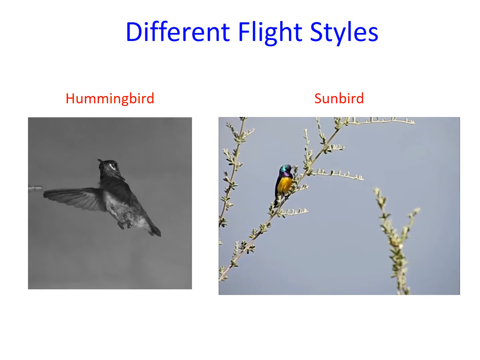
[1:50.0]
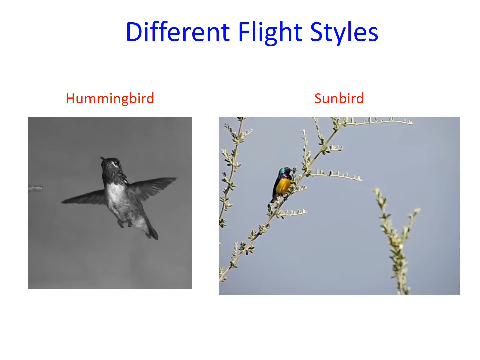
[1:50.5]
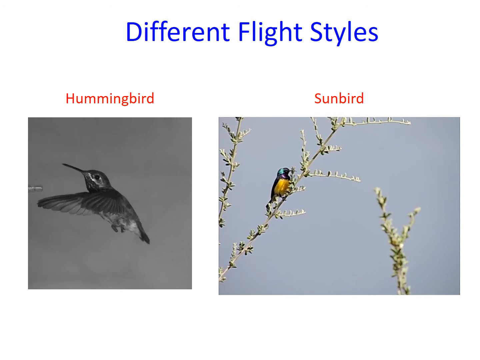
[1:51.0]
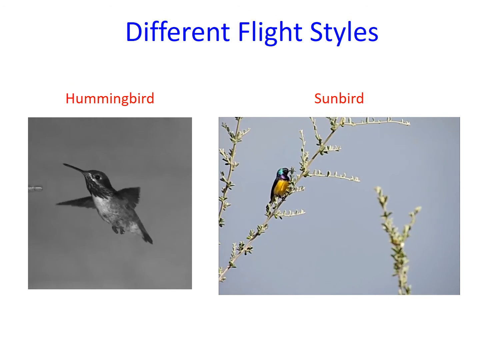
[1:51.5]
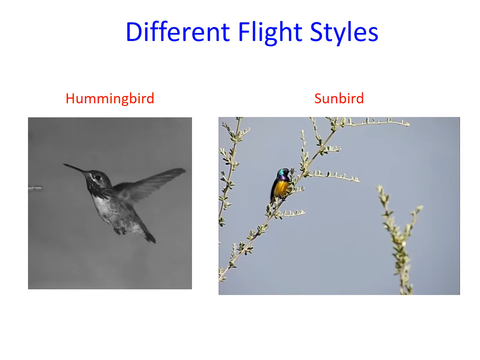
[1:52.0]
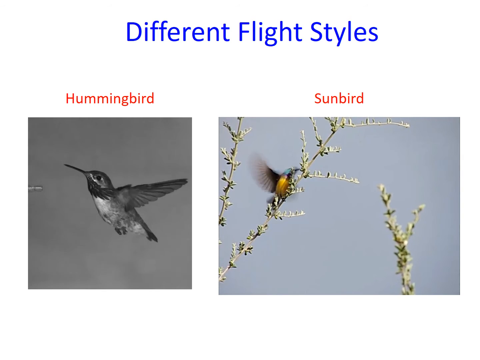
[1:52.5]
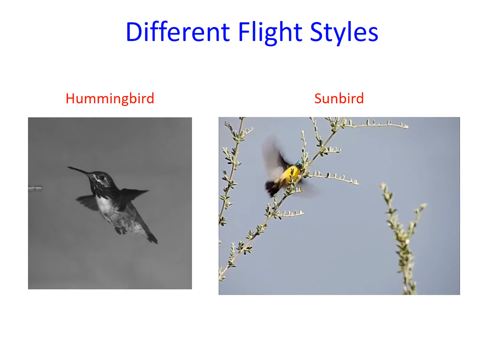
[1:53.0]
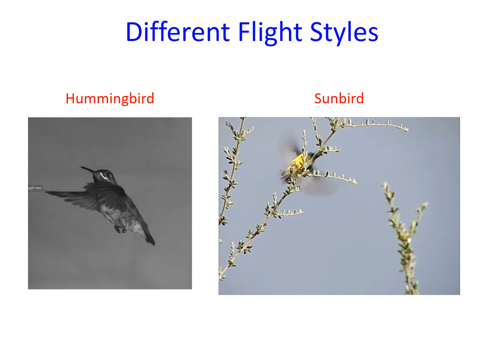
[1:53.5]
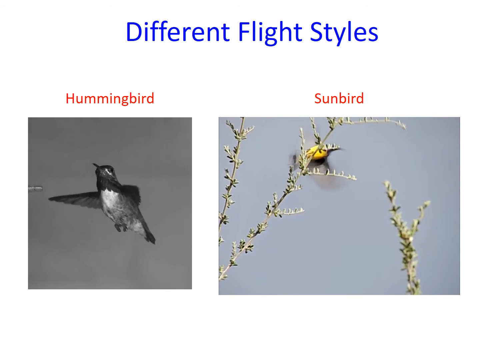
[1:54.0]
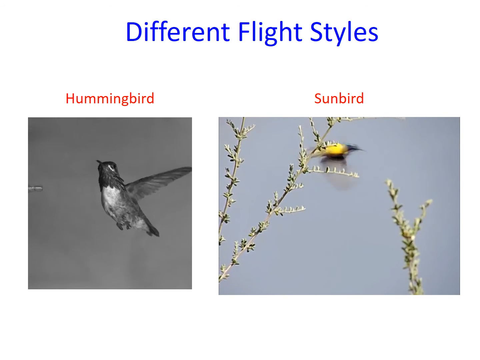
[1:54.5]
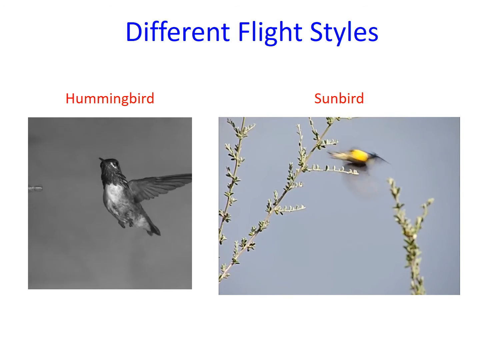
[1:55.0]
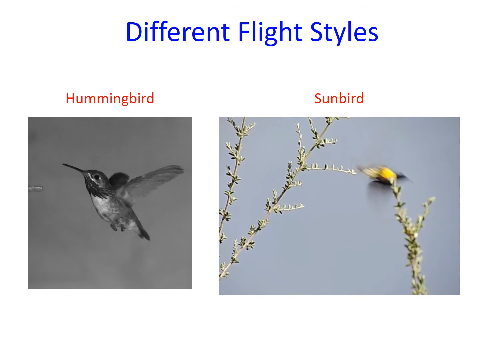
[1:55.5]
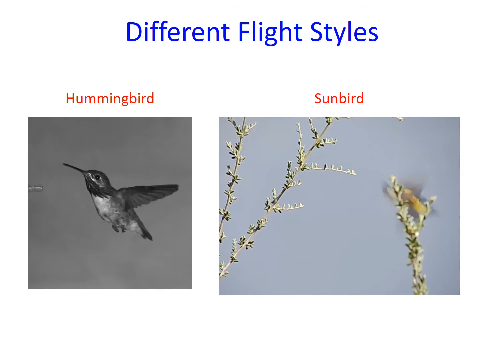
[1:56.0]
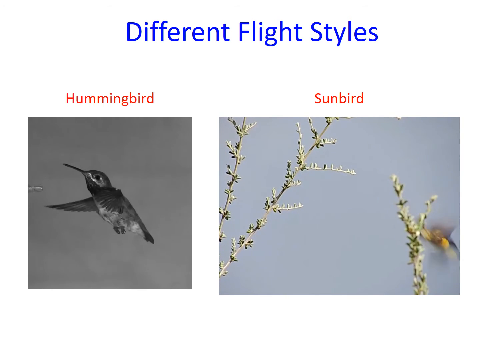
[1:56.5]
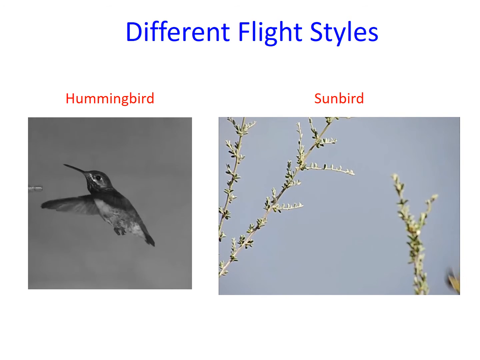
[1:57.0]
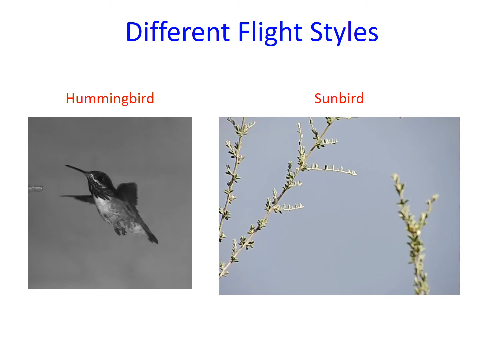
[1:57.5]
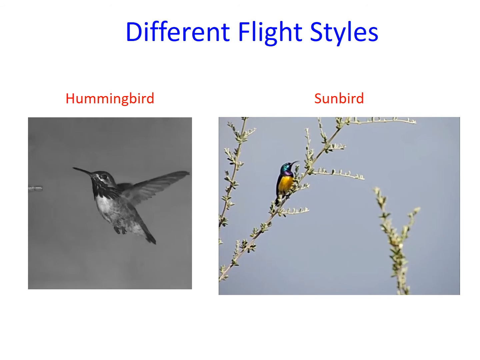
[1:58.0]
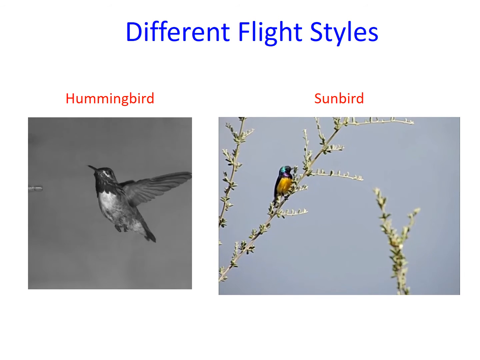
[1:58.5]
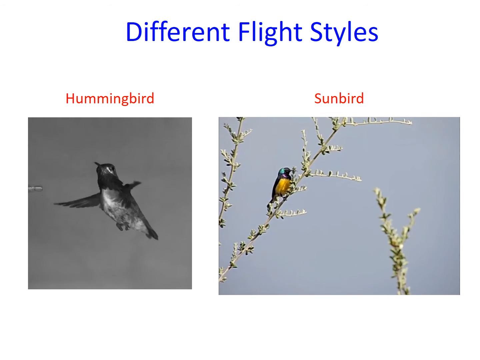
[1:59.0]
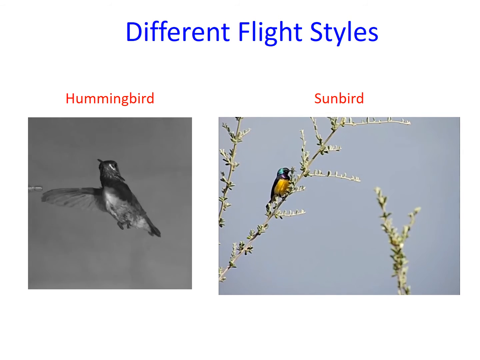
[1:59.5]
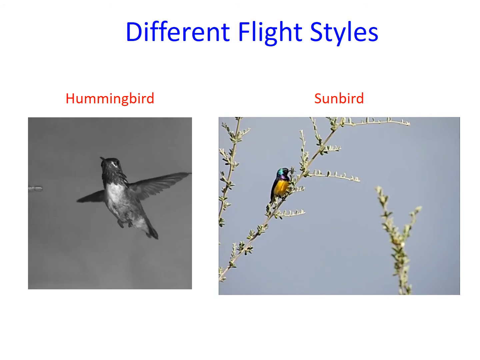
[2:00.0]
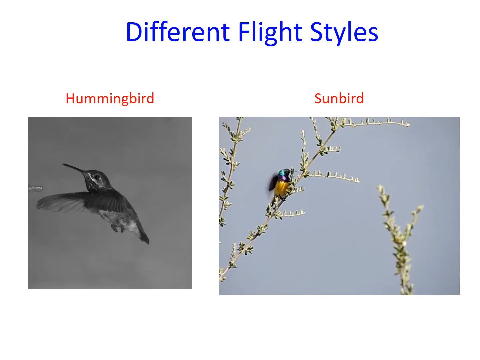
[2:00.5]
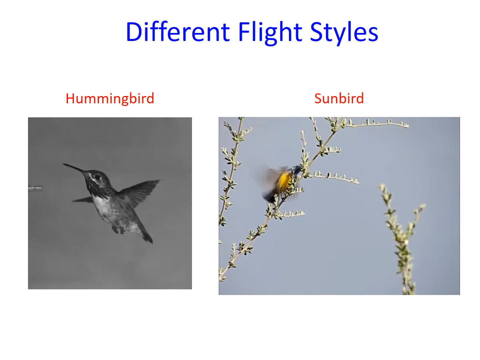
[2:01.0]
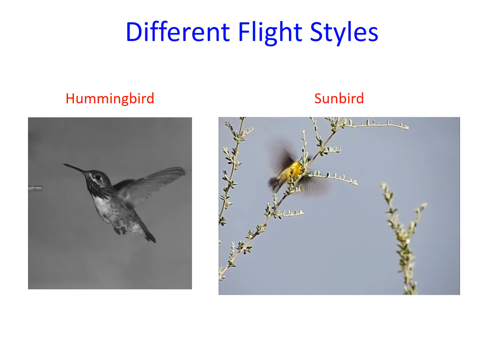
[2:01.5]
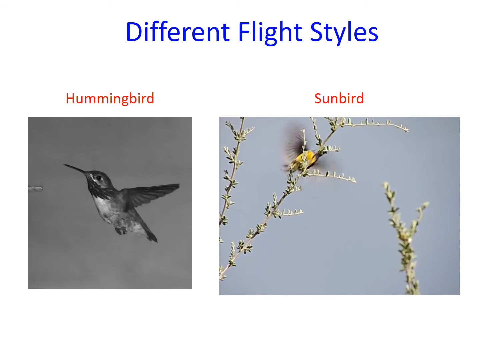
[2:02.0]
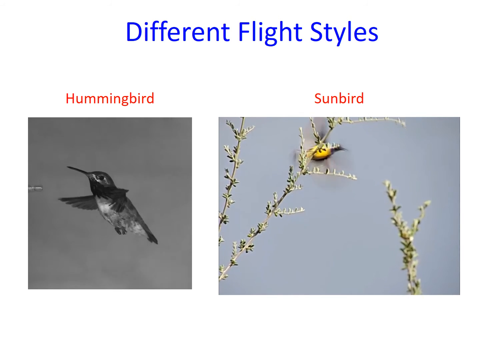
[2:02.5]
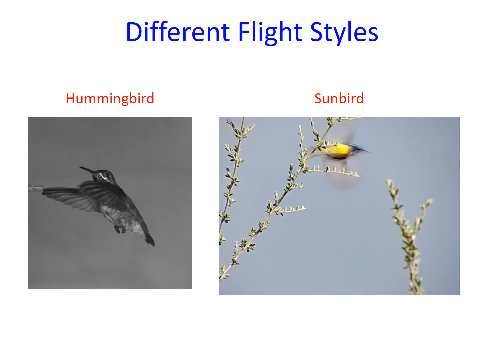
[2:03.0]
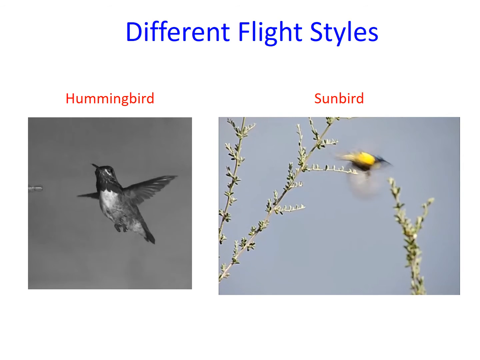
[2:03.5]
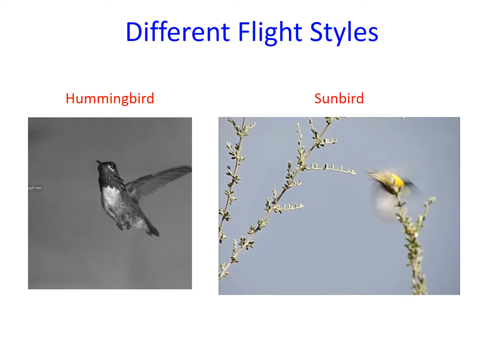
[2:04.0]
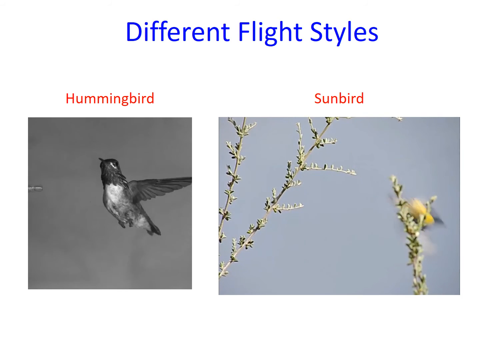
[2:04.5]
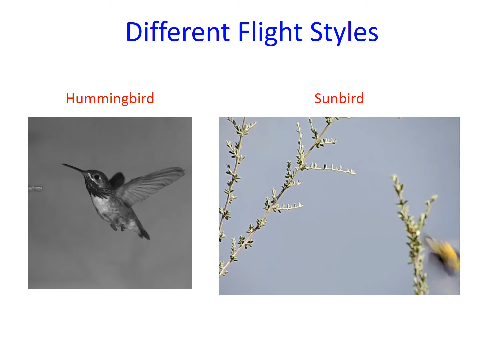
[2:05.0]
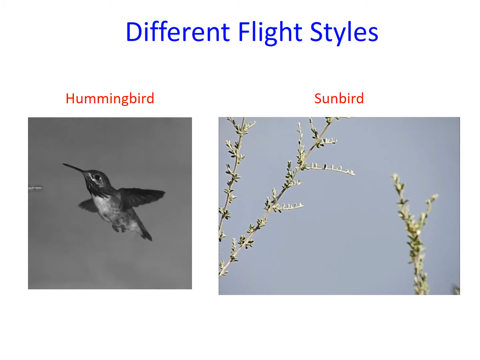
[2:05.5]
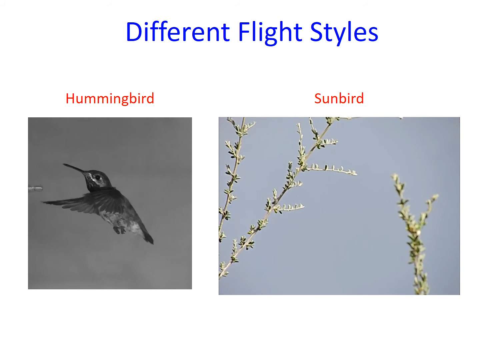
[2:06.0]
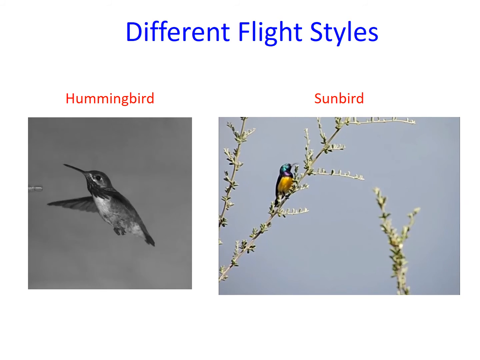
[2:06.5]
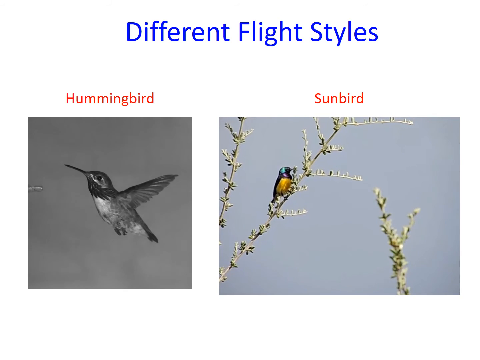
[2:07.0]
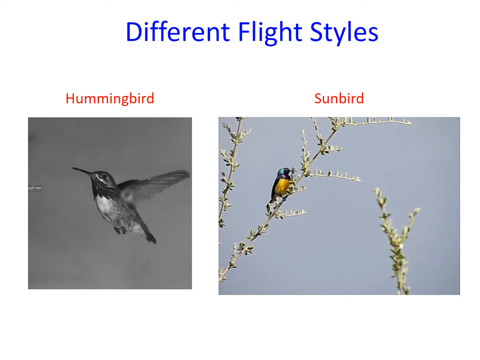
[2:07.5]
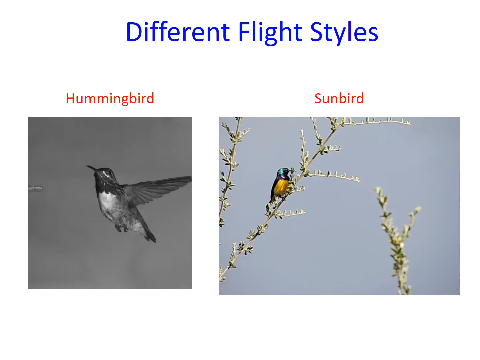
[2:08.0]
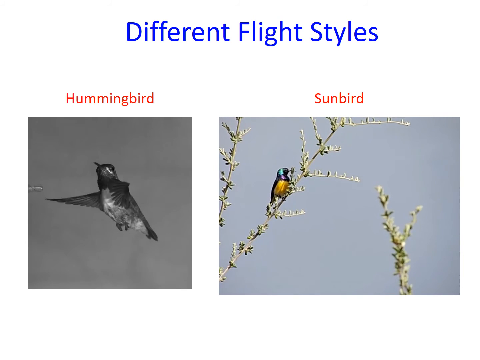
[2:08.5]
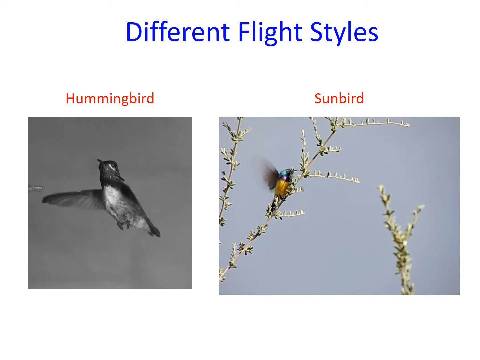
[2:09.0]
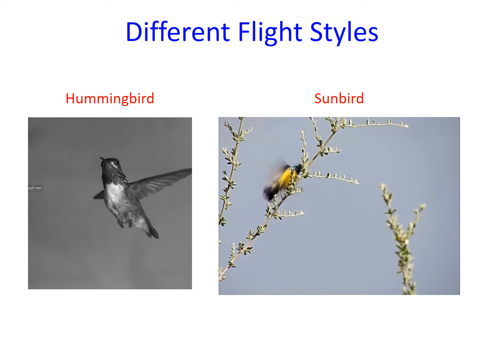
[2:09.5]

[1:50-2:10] Two birds are contrasted side by side. On the left, a hummingbird shown in black and white flaps its wings back and forth frantically; on the right, a sunbird shown in color flaps its wings in a very similar manner. The birds are then shown moving along different flight paths, with geographical areas of the world in the background. There is a separate blue swan in the foreground and a number of green swans.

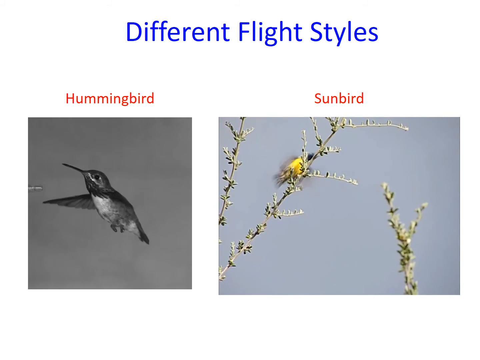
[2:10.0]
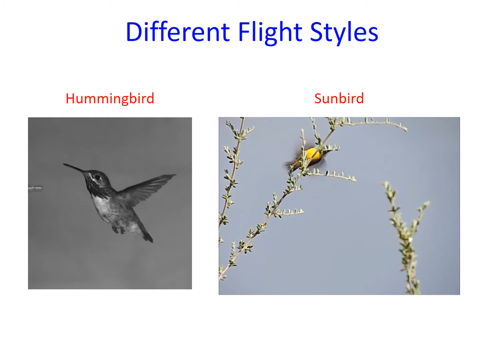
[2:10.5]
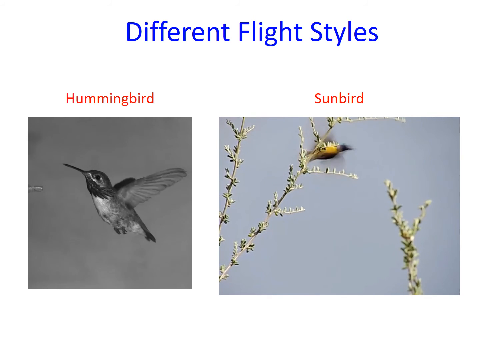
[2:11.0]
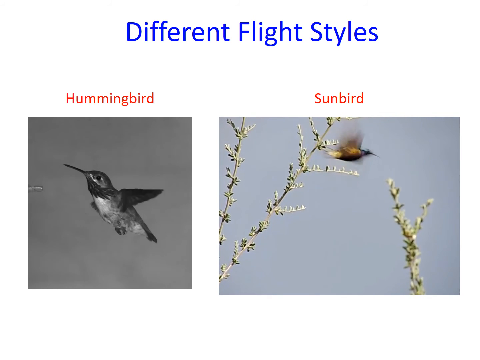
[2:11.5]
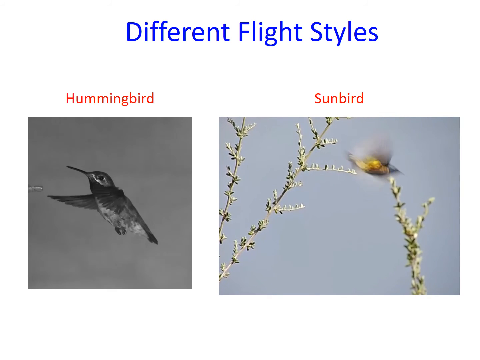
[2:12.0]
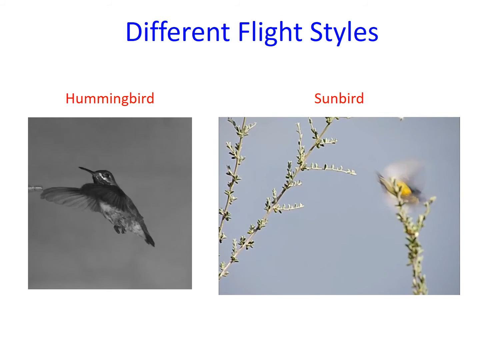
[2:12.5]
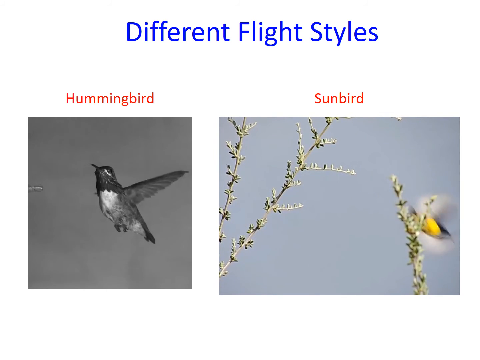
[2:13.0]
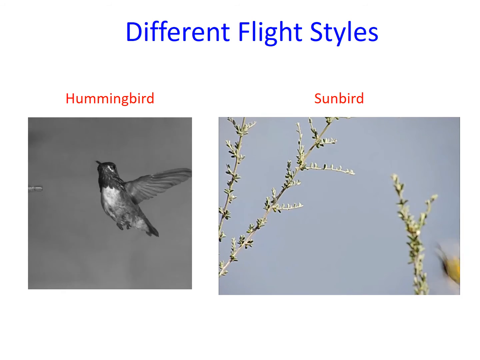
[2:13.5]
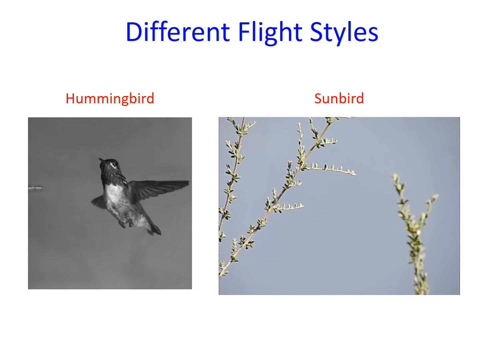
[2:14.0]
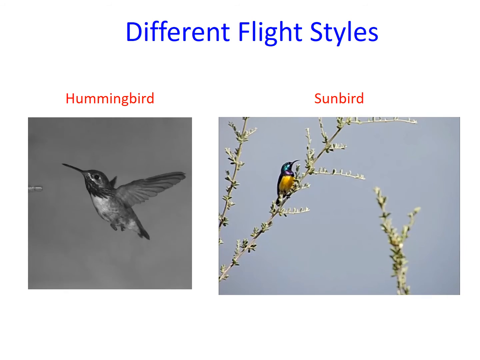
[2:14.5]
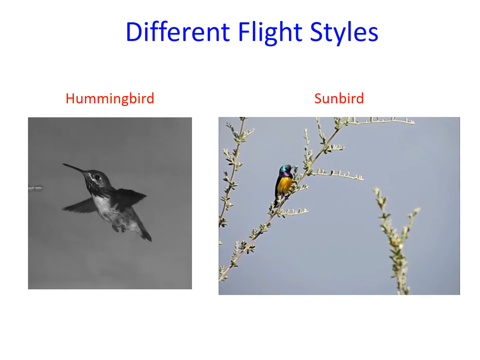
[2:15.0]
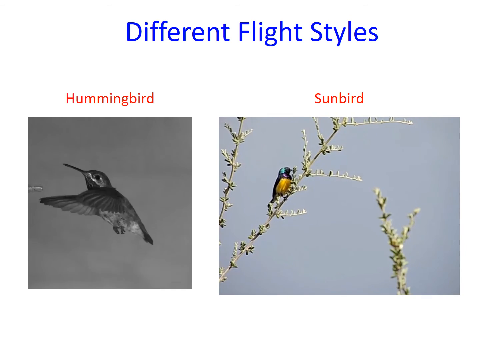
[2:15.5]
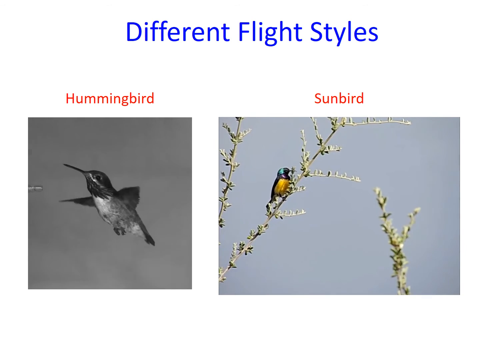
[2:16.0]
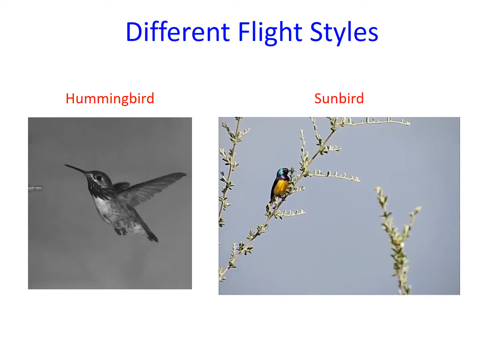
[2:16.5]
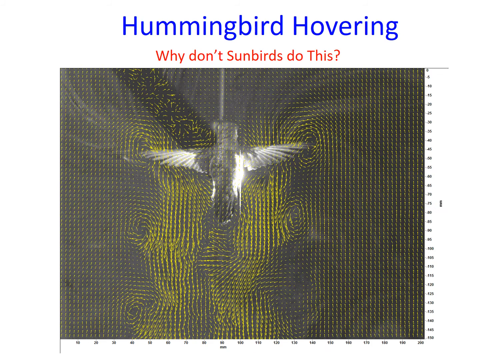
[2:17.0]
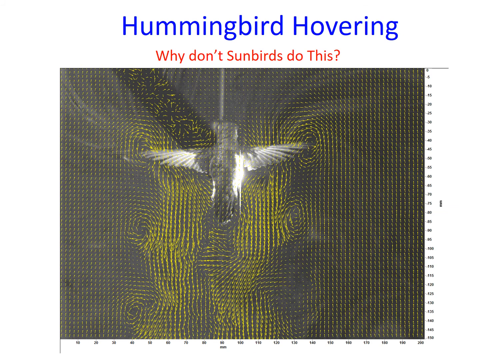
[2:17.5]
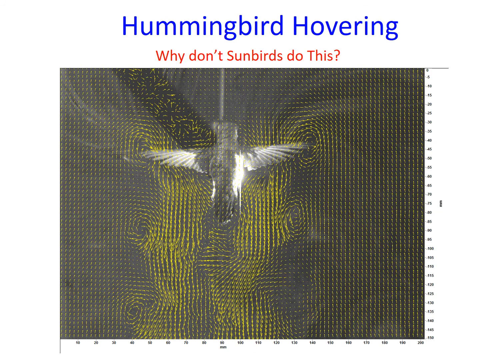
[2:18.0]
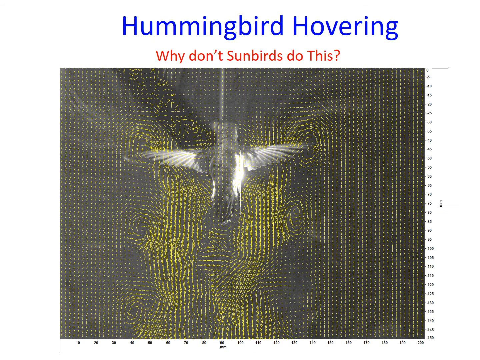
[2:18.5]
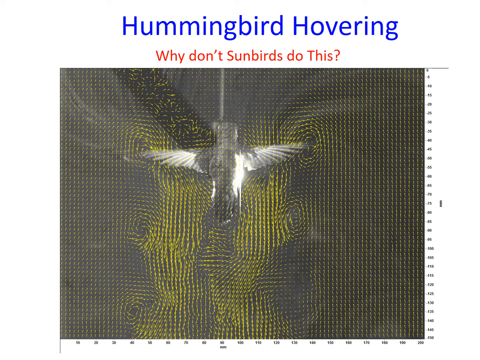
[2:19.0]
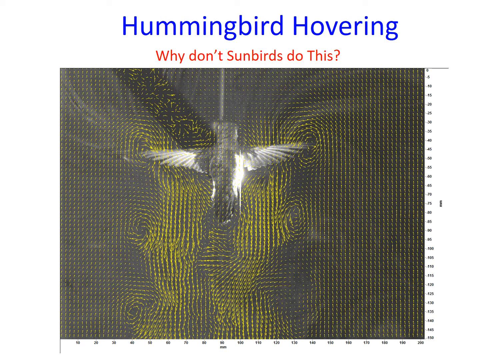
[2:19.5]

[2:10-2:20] Two birds appear on the left side of a brown section of the screen, moving in different directions with their wings flapping frantically as they move quickly across the screen from one area to the next. Some green in the background shows small leaves, and small birds are also in the background.